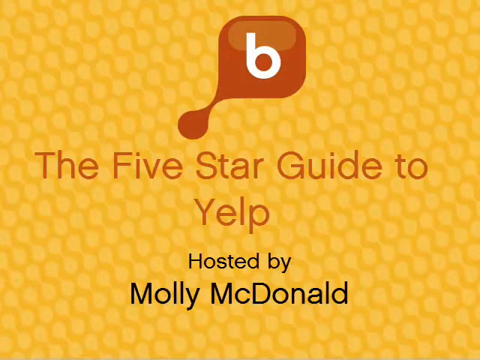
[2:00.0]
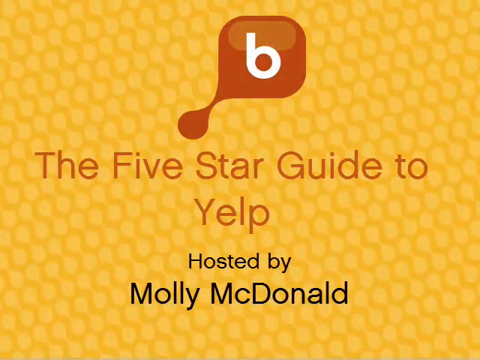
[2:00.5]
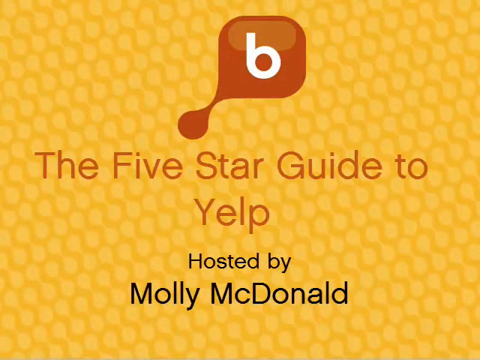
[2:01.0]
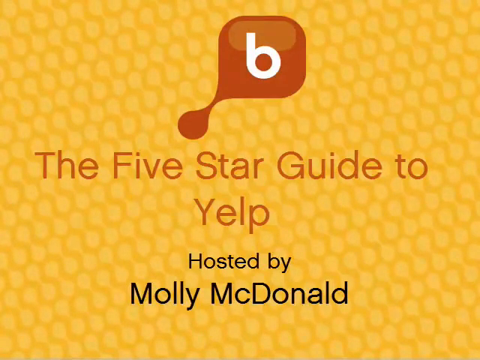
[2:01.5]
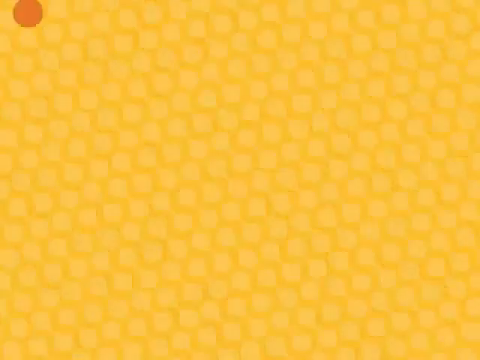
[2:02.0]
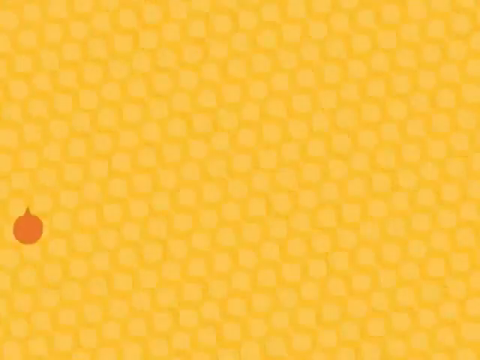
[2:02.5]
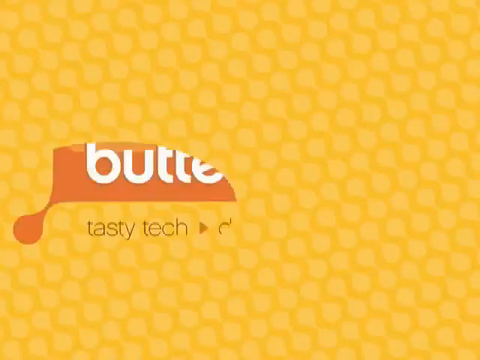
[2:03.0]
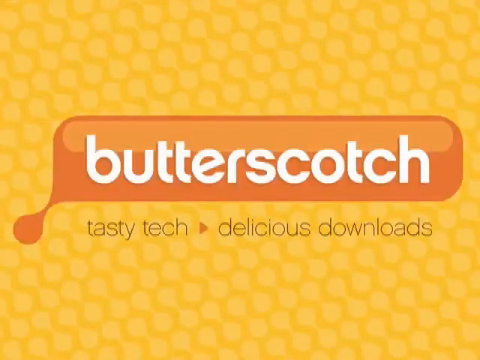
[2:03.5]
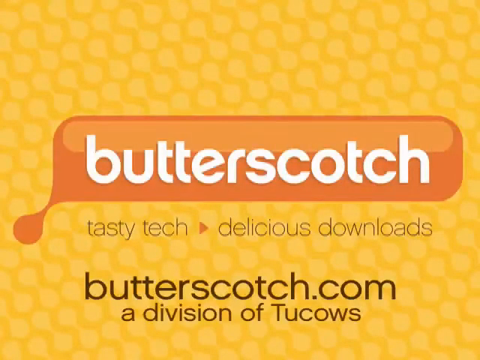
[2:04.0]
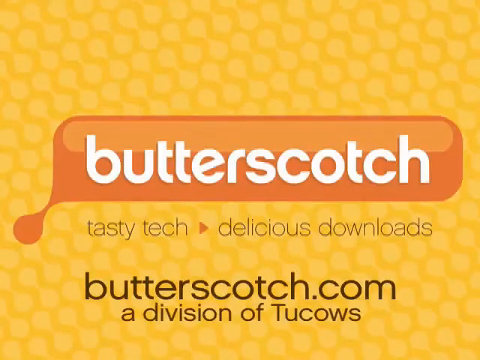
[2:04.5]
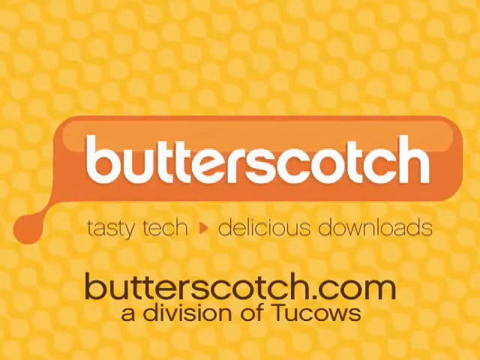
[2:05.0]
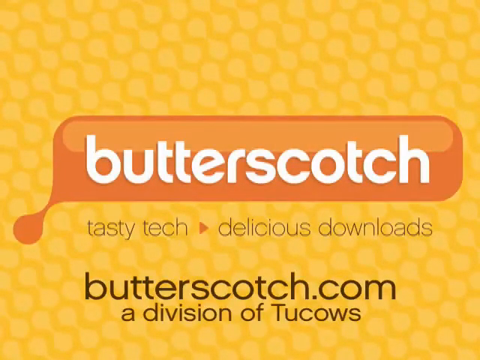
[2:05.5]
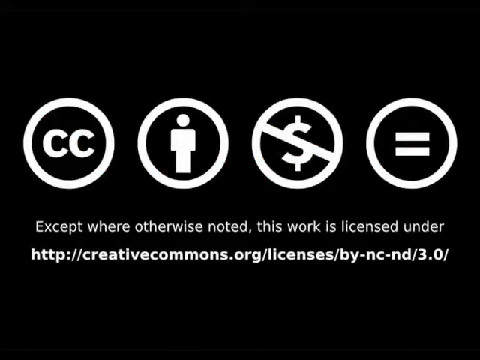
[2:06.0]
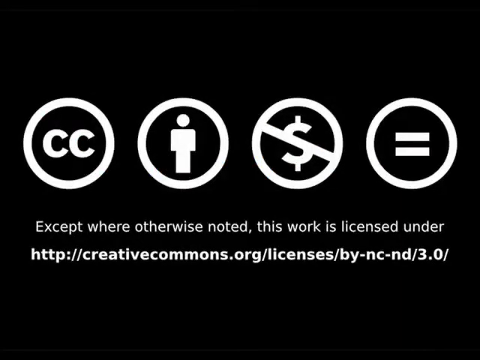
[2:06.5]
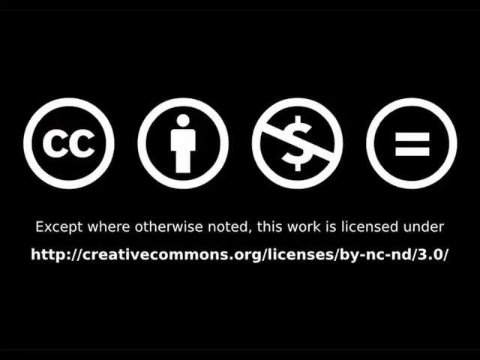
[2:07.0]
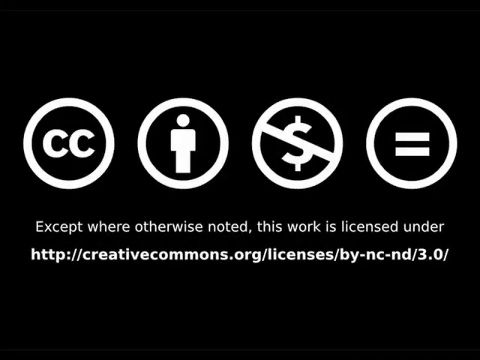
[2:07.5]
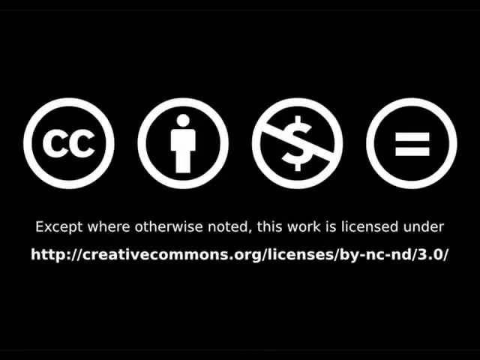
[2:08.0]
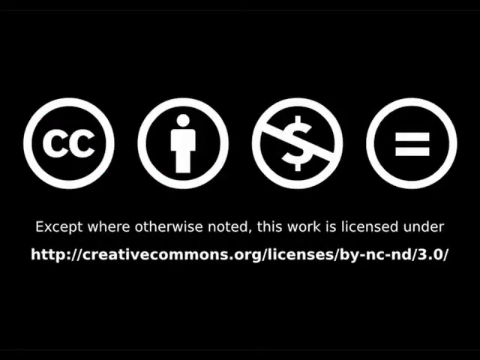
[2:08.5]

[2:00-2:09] A dark orange background with lighter orange tones forms a honeycomb pattern. A very, very dark orange little dot expands into a larger bubble containing white text that reads "butterscotch." Under the bubble is "tasty tech," and then a dark orange arrow points at "delicious downloads." Under these two phrases is the URL "butterscotch.com," and under the URL is "a division of two cows." All of this is overlaid onto the honeycomb-like pattern that fills the background. The video then moves to a black screen with four white circles: one with a CC, the next a stick figure person, the next a dollar sign with a slash through it, and the last an equal sign. Under these is the text "Except where otherwise noted, this work is licensed under" followed by a URL, all in white.